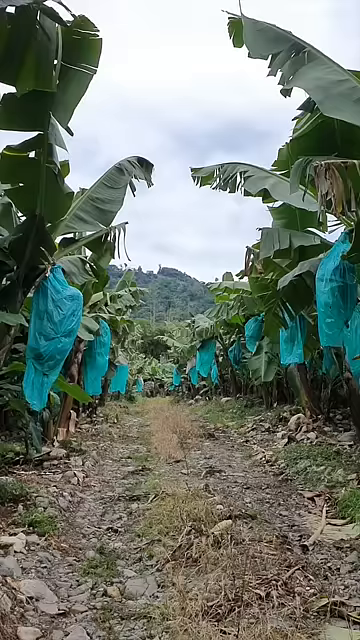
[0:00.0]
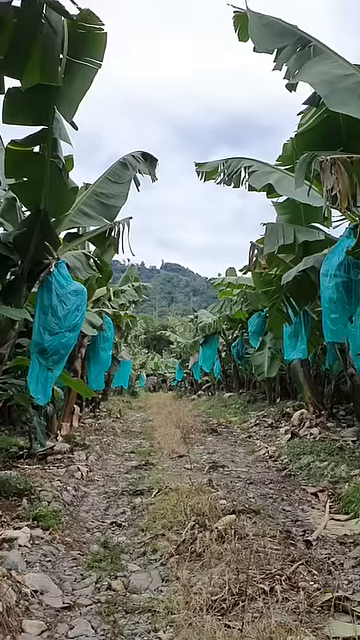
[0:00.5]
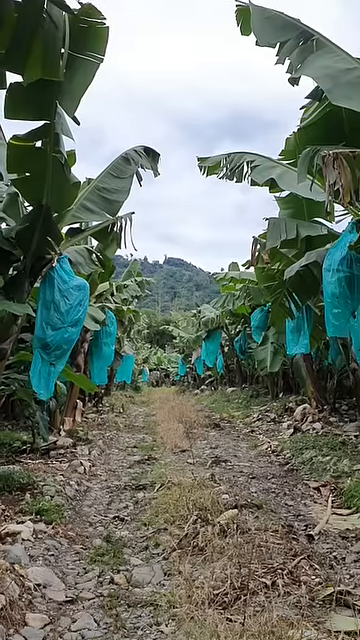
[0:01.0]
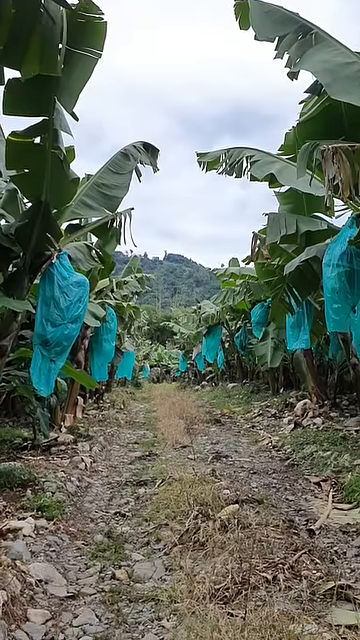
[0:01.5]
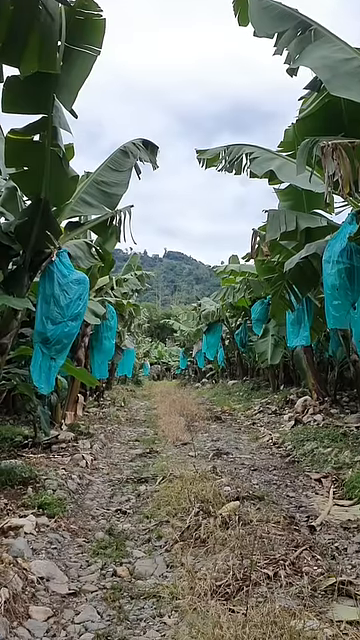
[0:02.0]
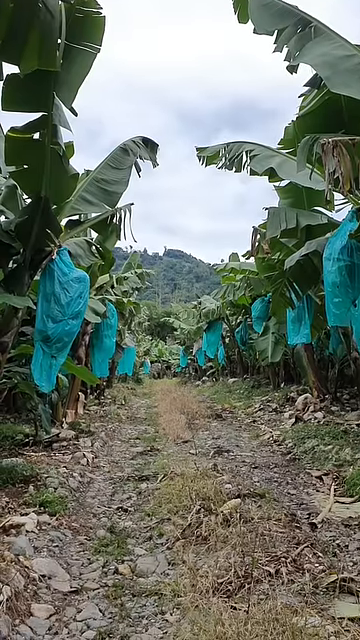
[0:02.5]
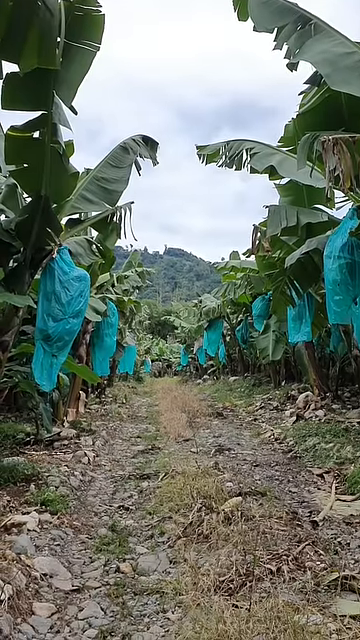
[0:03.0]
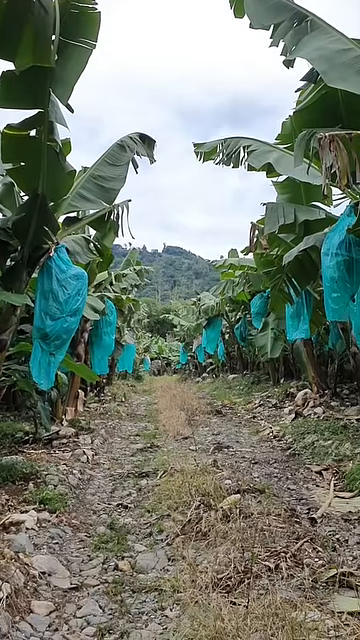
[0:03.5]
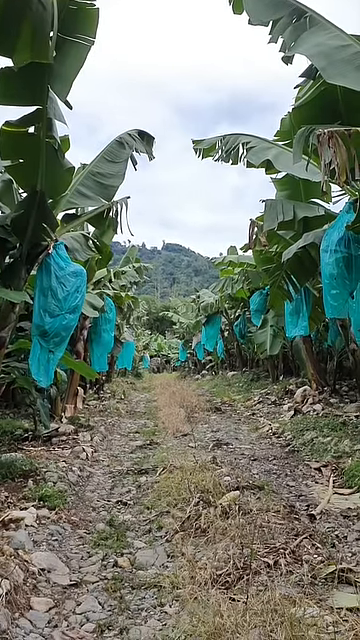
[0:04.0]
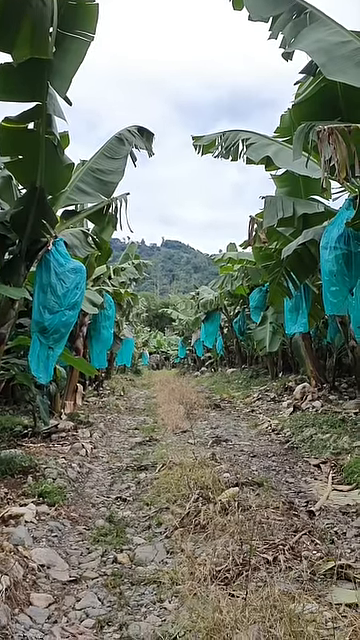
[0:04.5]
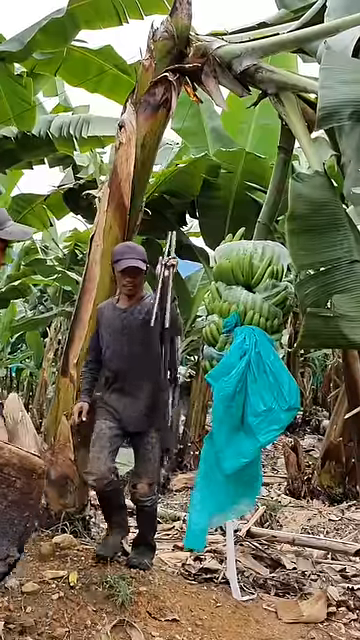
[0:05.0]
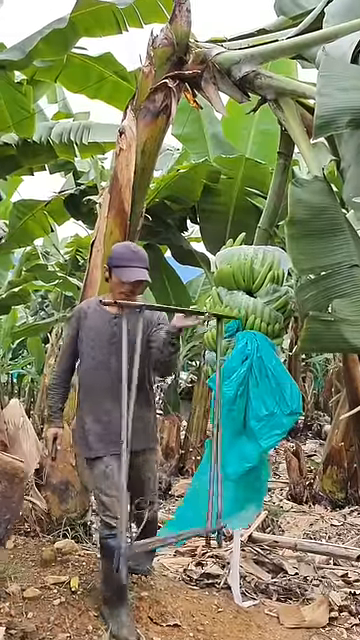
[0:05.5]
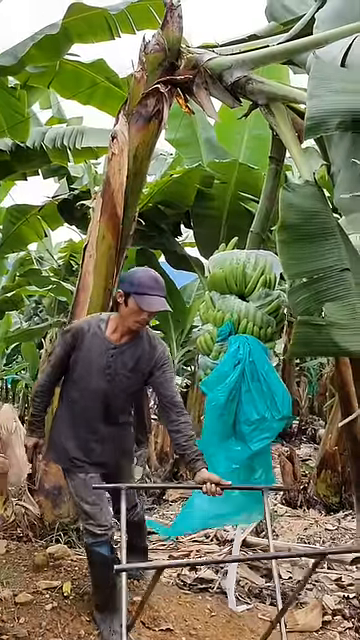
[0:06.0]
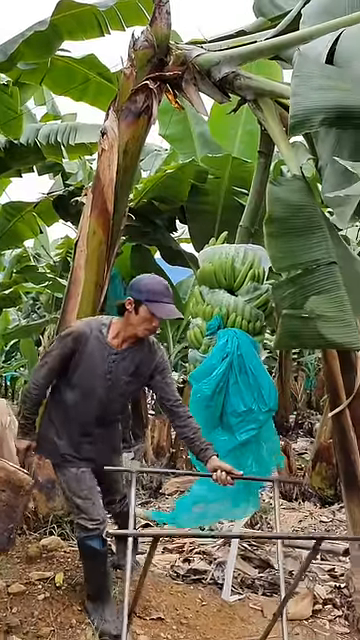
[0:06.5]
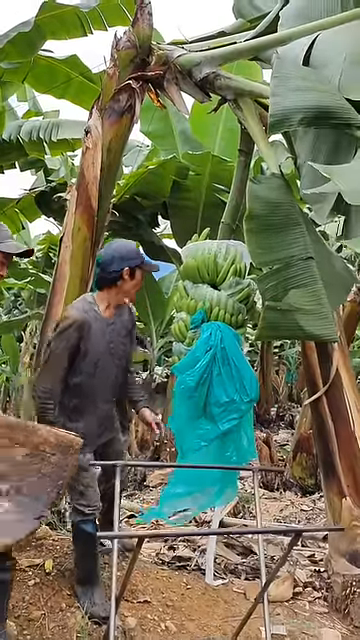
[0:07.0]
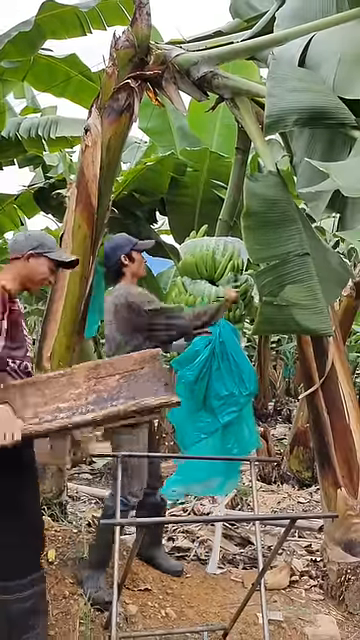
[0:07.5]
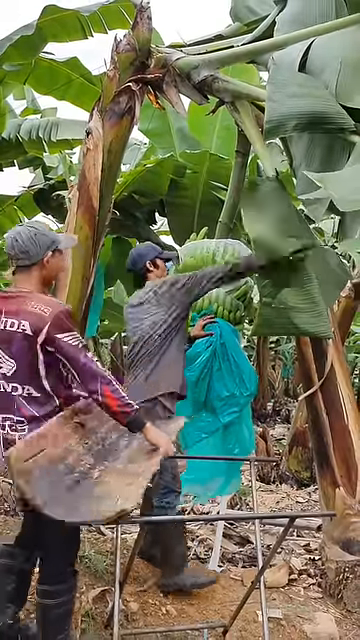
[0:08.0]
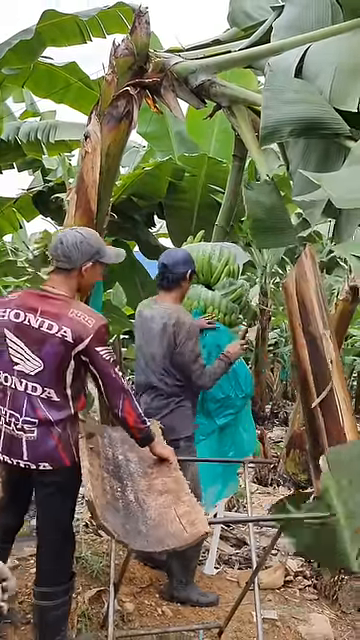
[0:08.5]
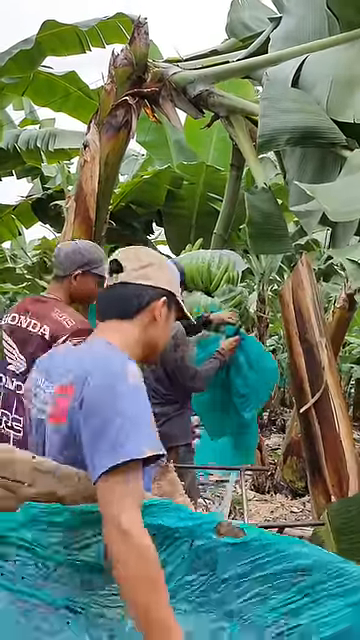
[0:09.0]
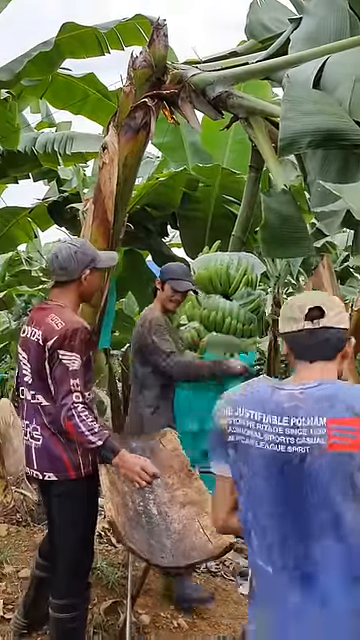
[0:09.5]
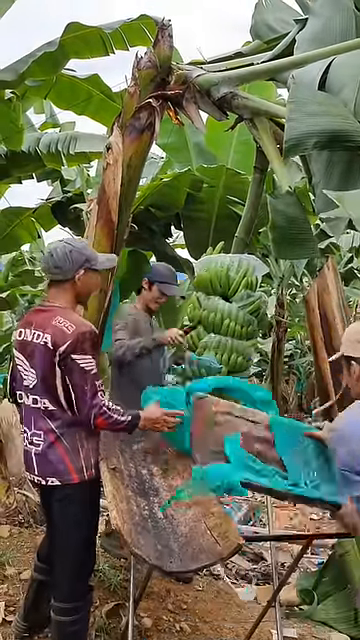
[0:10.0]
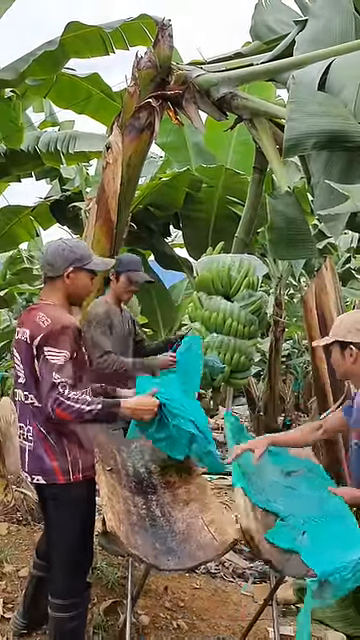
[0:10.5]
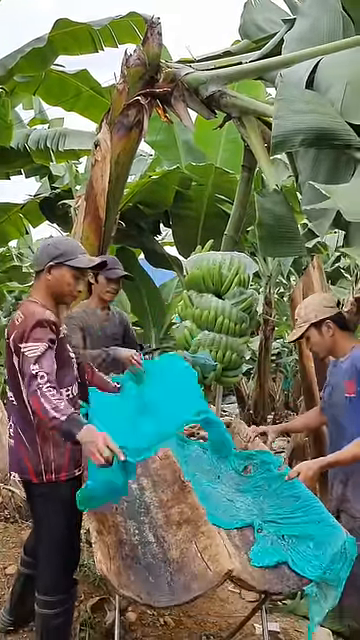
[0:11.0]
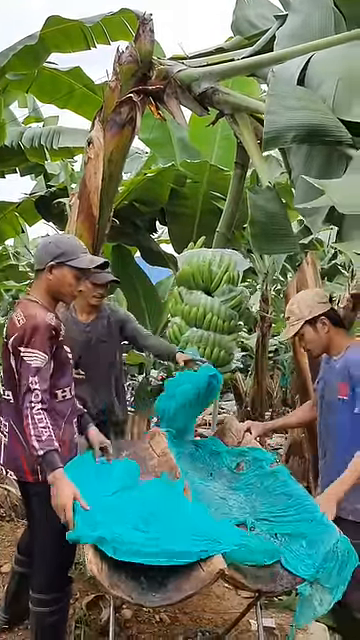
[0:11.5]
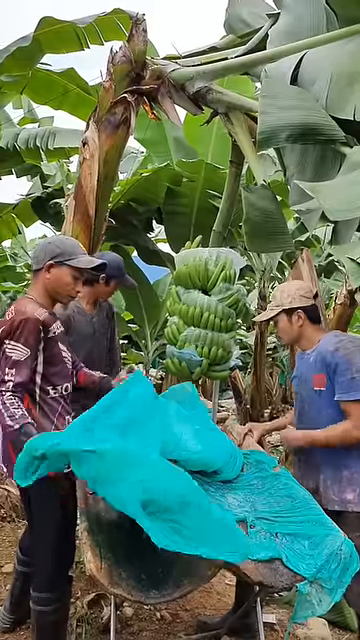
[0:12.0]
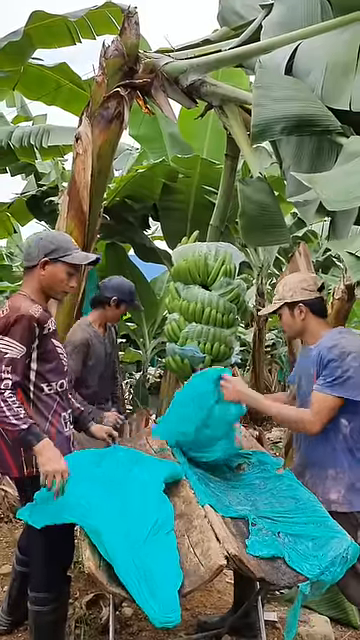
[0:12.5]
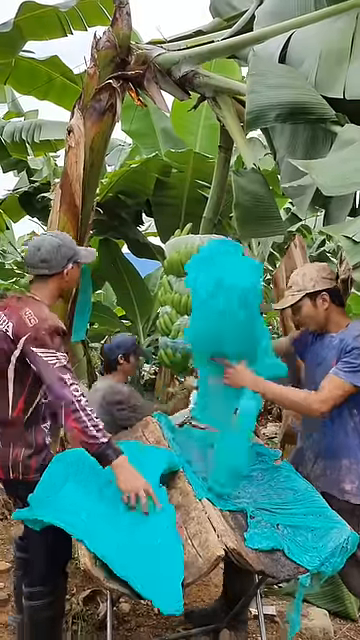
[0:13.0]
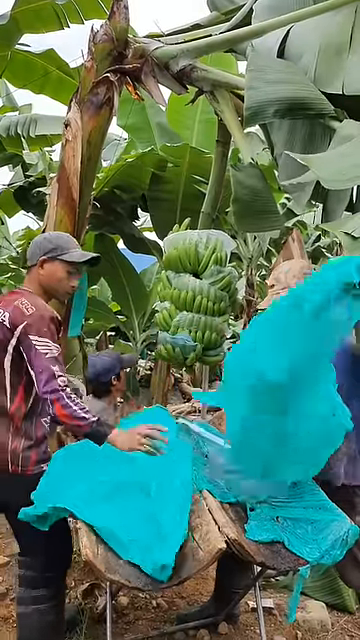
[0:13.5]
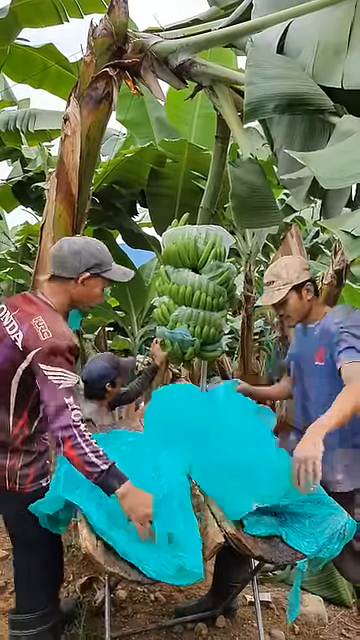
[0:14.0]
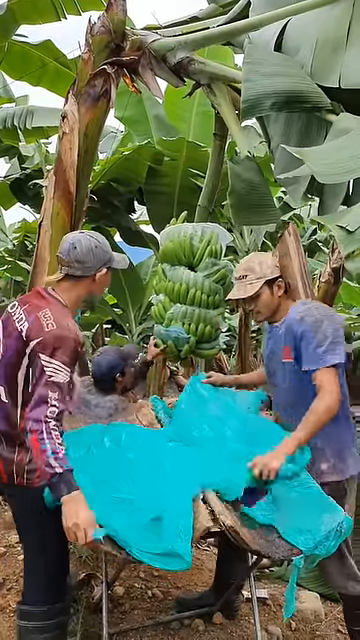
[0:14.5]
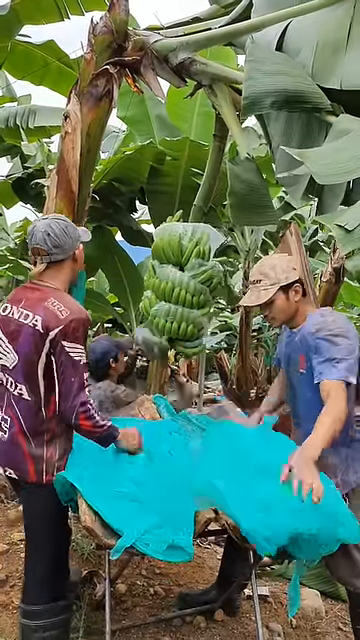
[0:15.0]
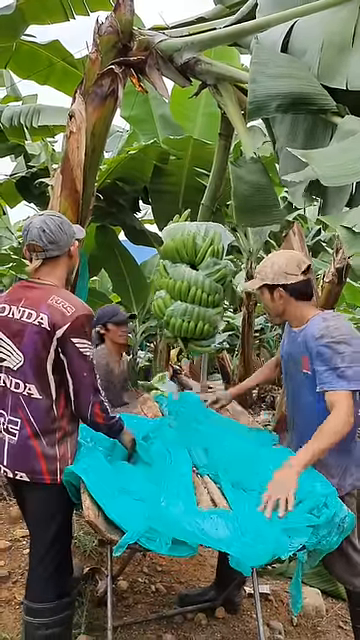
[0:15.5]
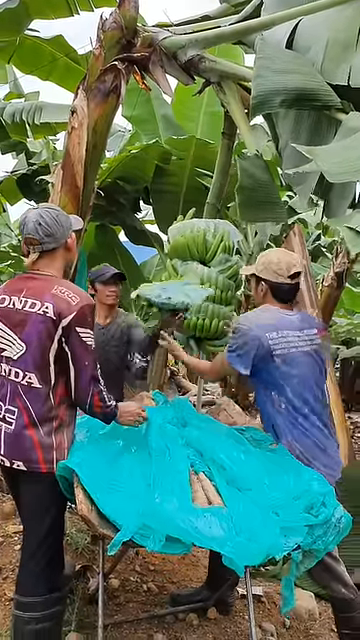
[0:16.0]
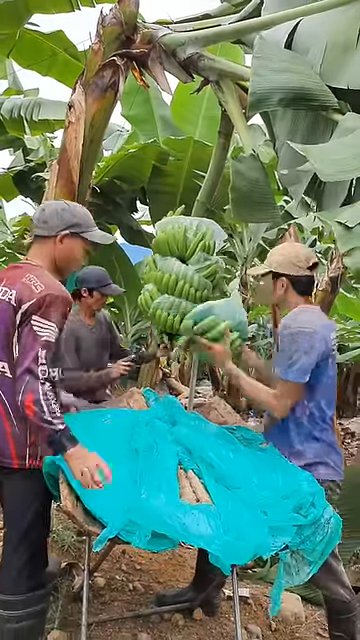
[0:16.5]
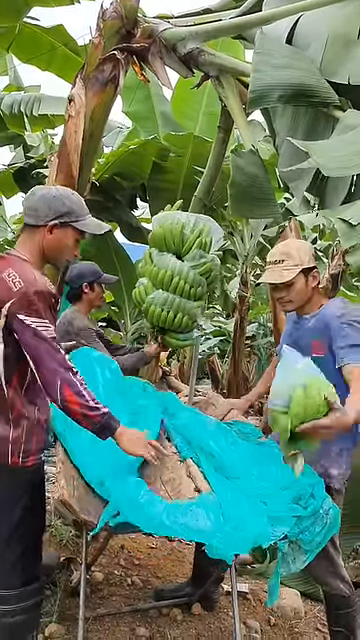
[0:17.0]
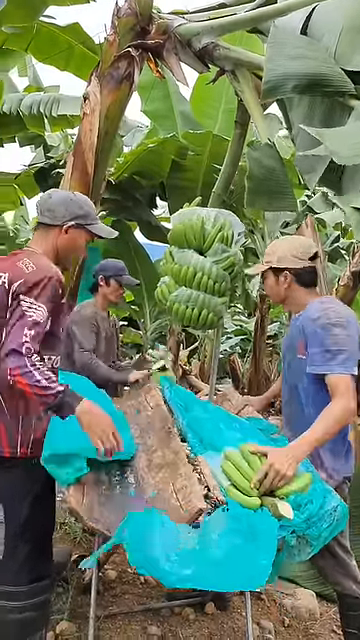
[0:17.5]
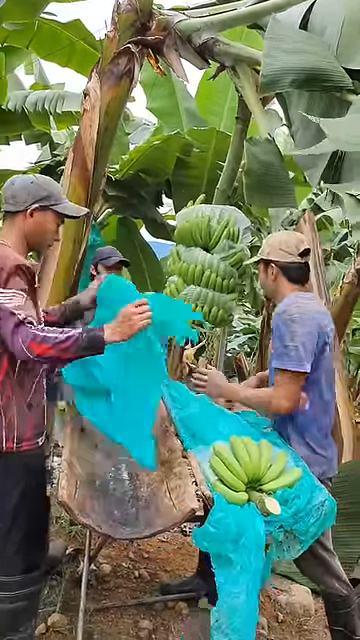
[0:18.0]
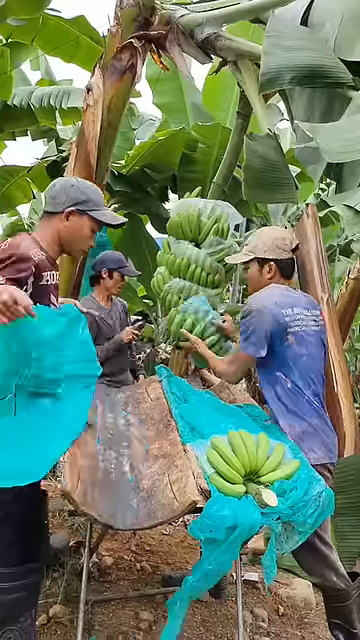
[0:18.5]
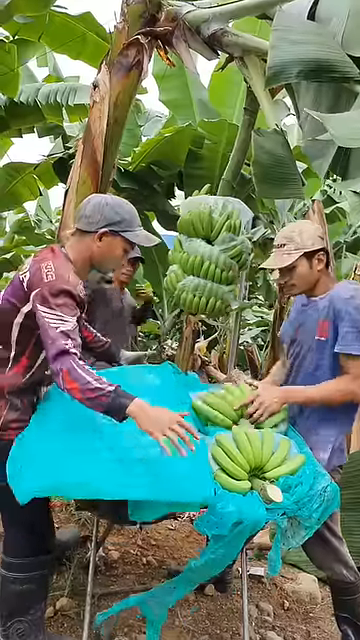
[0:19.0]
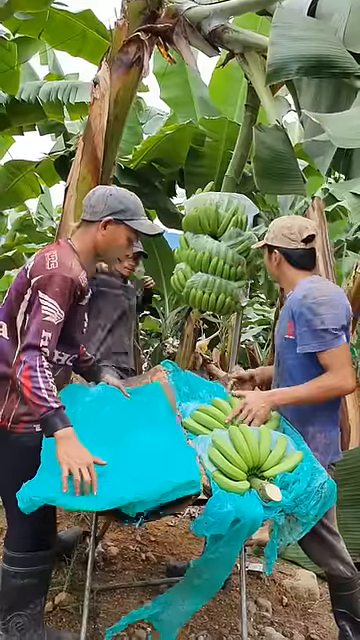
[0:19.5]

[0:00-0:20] The video appears to show three men working in a banana field. One man puts a metal stand down on the ground, then the other two set up a table with what looks like long cuts of tree bark as the tabletop cover. The two men then cover the table with blue plastic bags while the third man tosses them bunches of bananas. All three men wear baseball caps and short- and long-sleeved t-shirts. The bananas hang from a tree, and the third man uses a large knife to remove them from the large harvest of bananas.